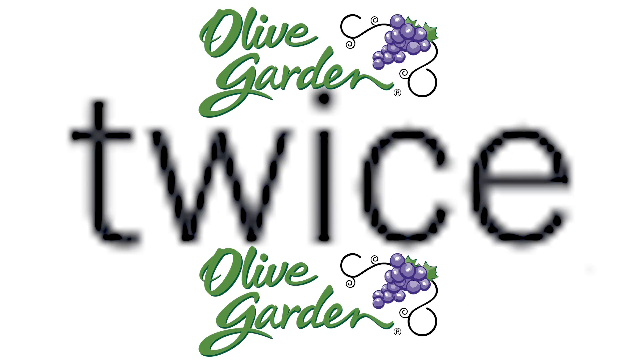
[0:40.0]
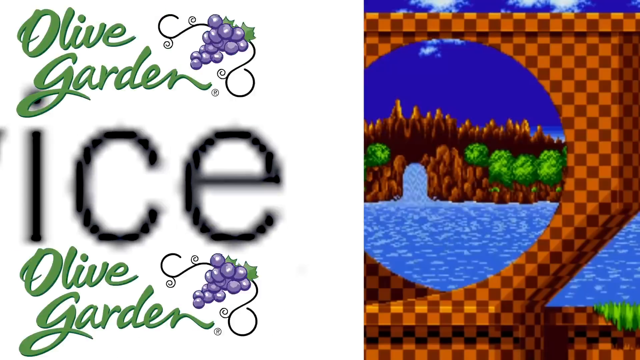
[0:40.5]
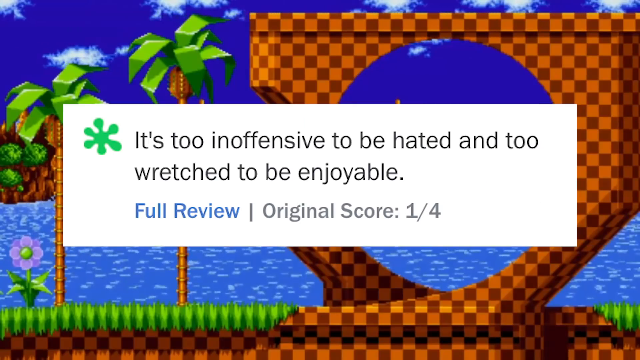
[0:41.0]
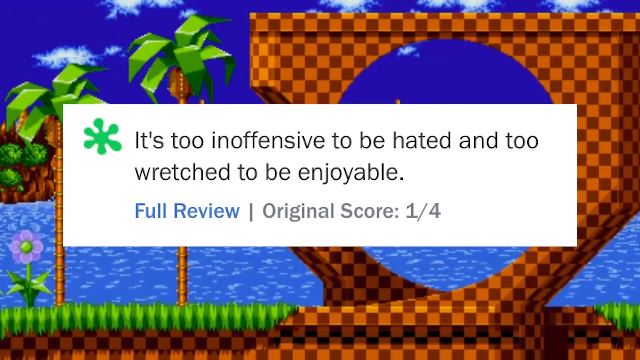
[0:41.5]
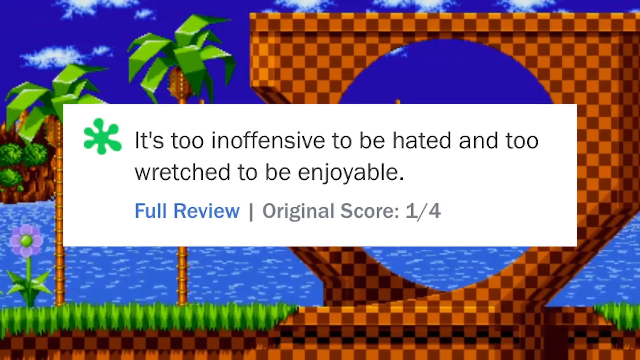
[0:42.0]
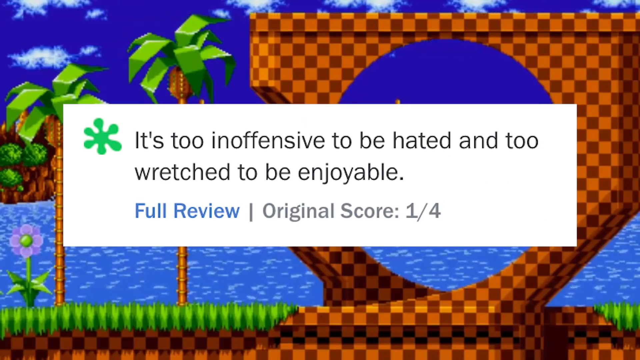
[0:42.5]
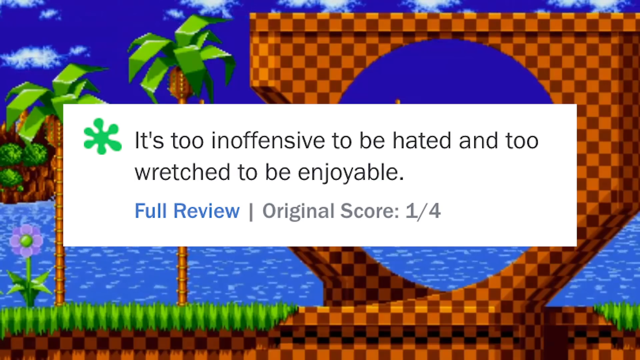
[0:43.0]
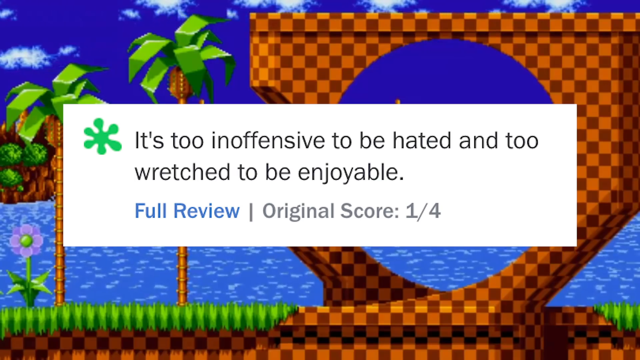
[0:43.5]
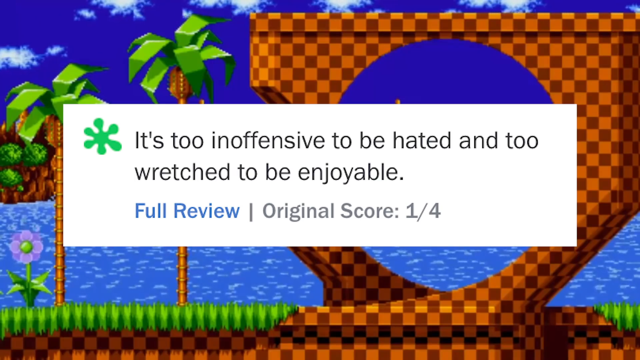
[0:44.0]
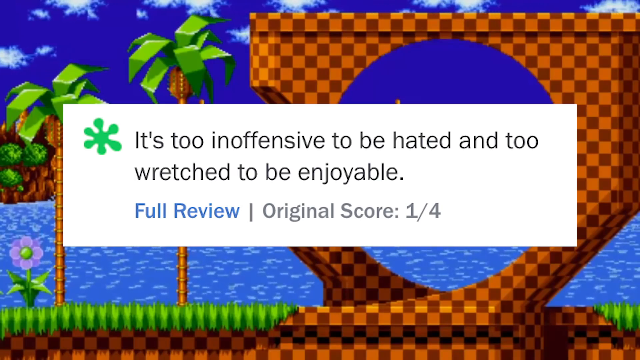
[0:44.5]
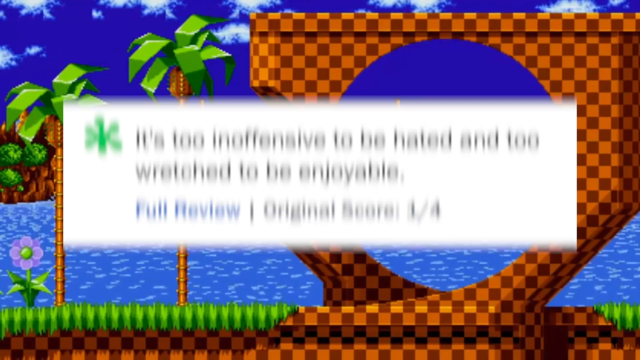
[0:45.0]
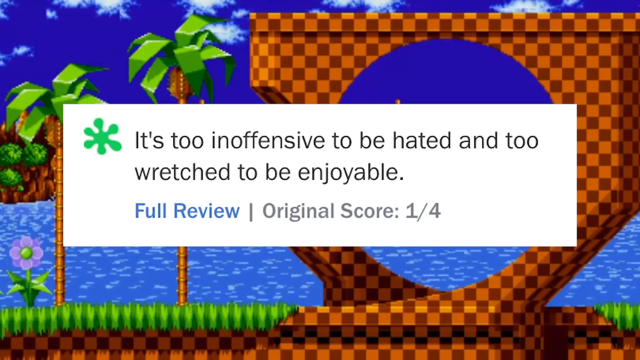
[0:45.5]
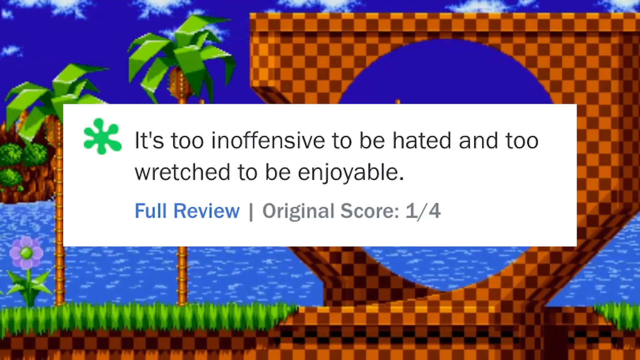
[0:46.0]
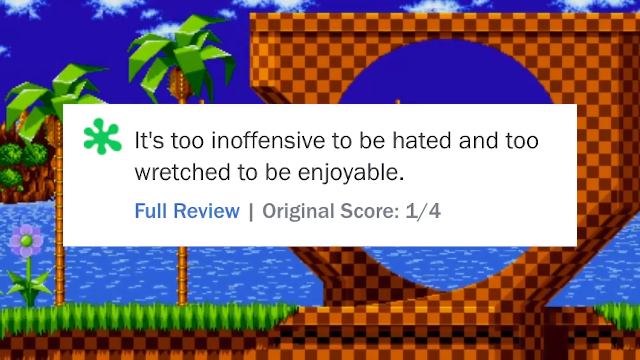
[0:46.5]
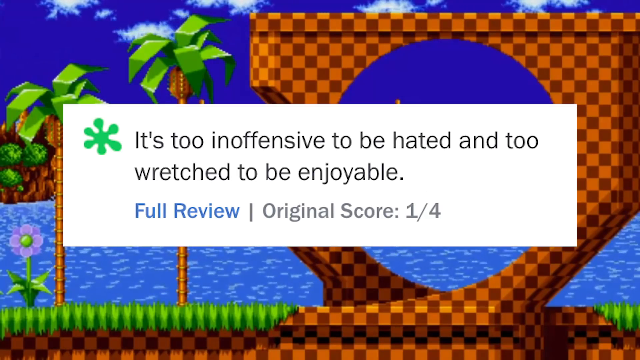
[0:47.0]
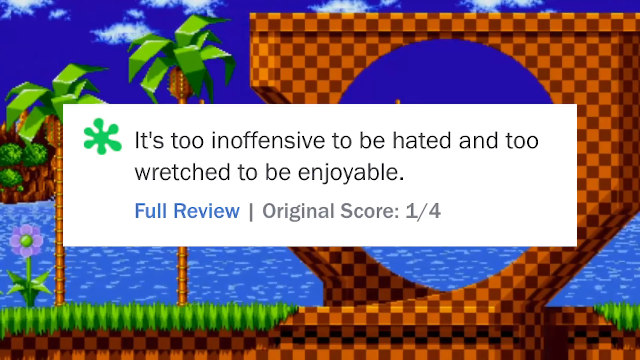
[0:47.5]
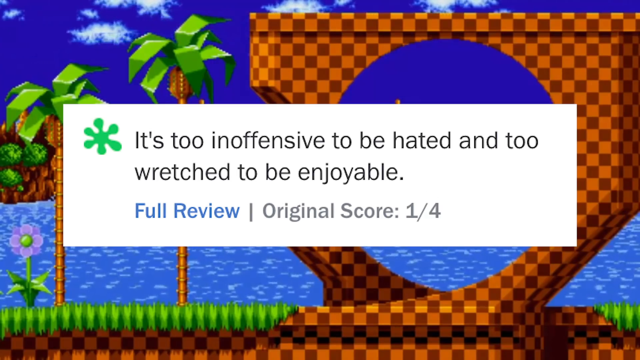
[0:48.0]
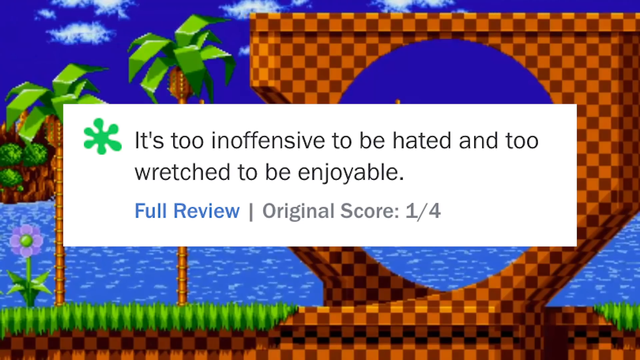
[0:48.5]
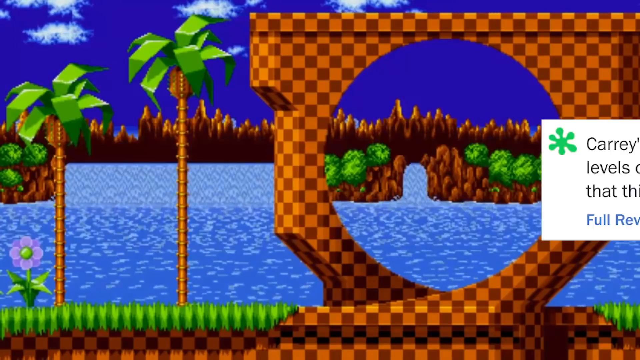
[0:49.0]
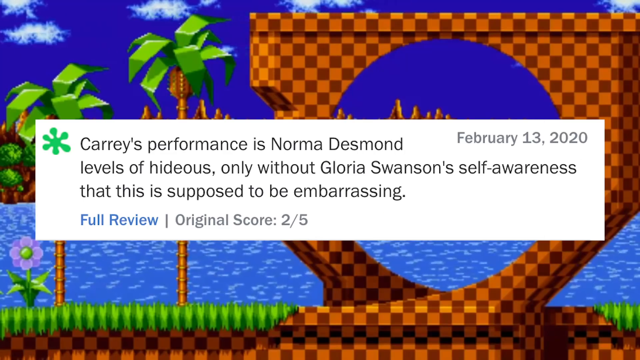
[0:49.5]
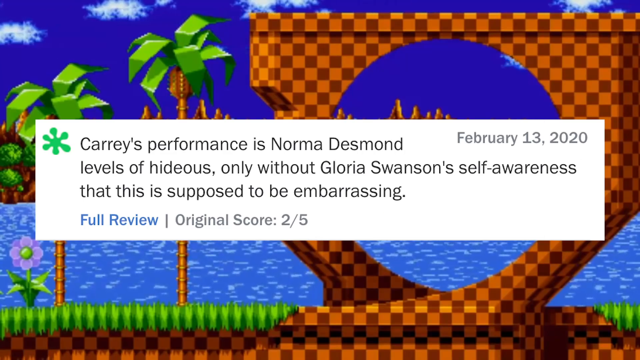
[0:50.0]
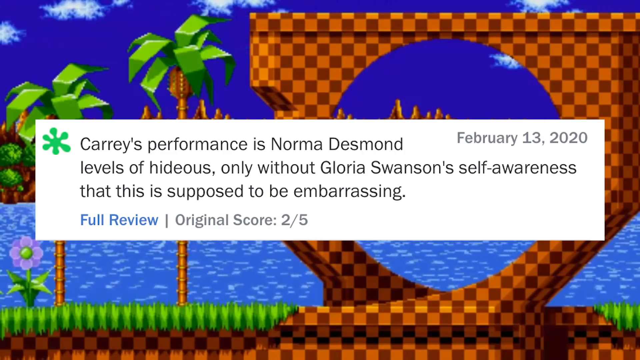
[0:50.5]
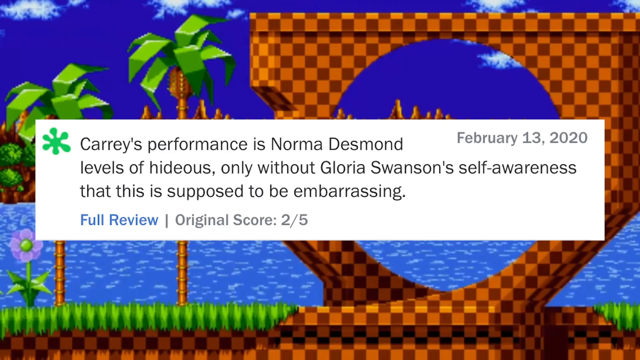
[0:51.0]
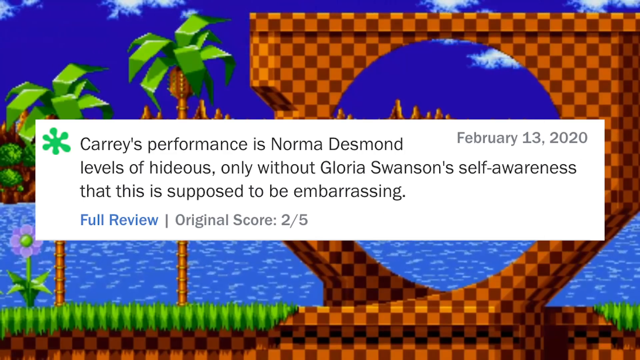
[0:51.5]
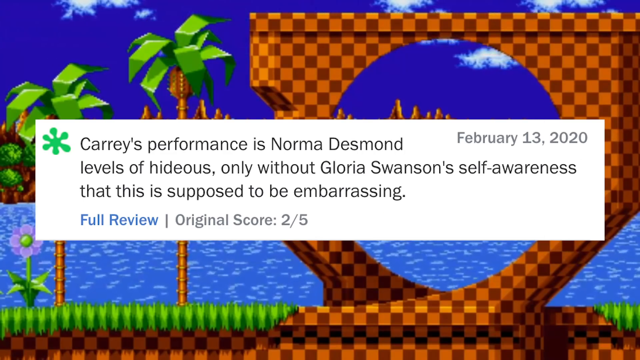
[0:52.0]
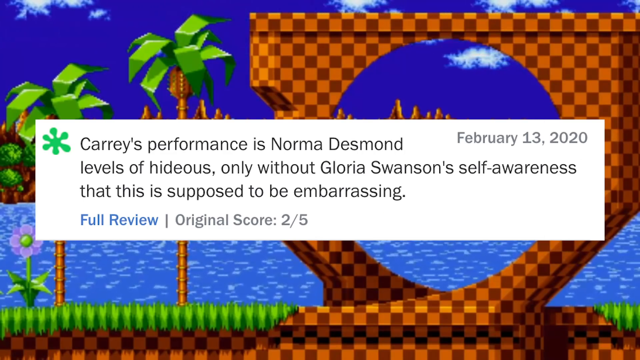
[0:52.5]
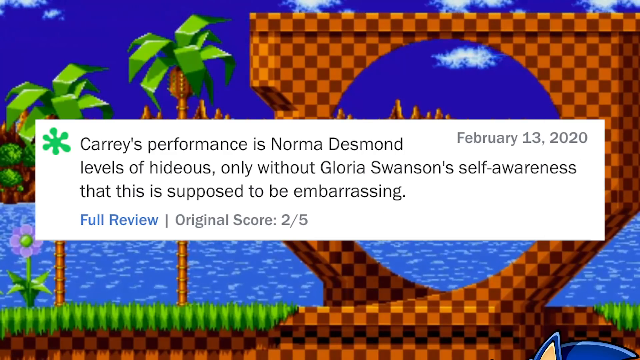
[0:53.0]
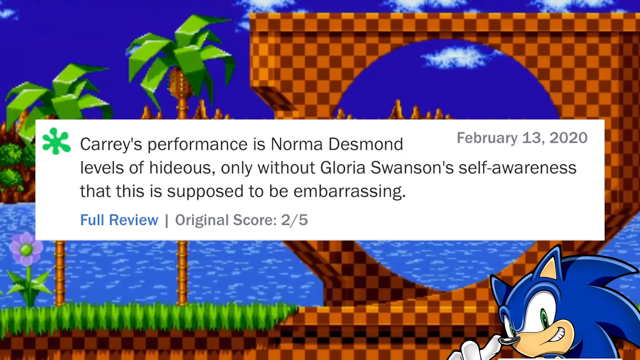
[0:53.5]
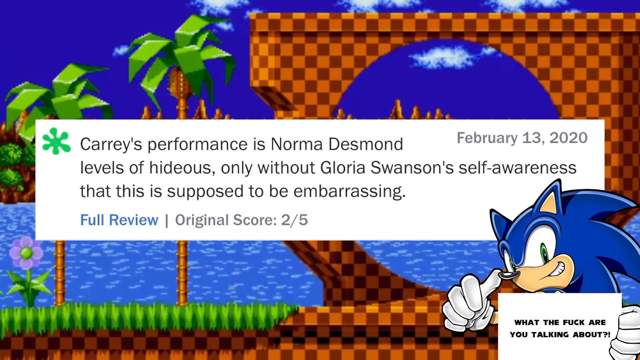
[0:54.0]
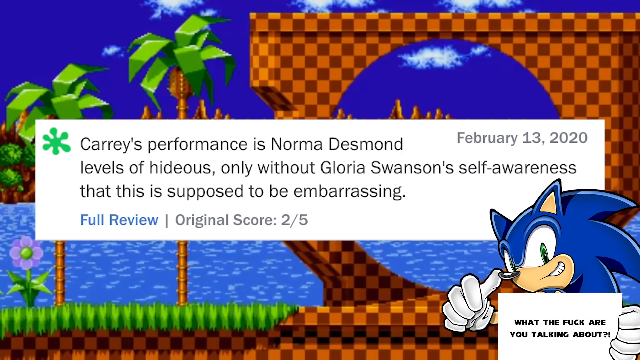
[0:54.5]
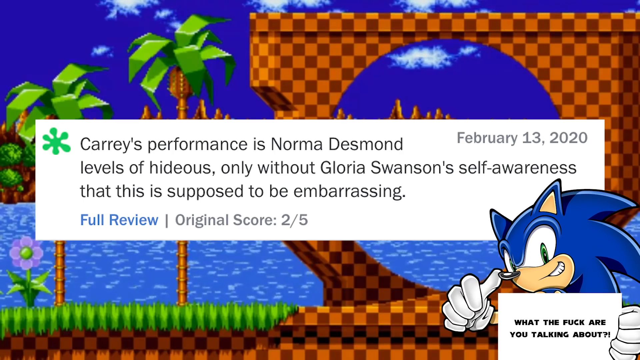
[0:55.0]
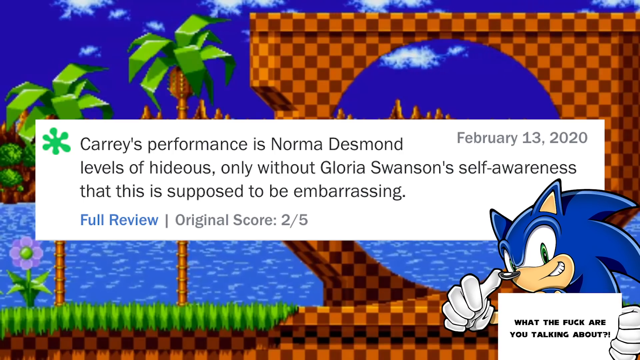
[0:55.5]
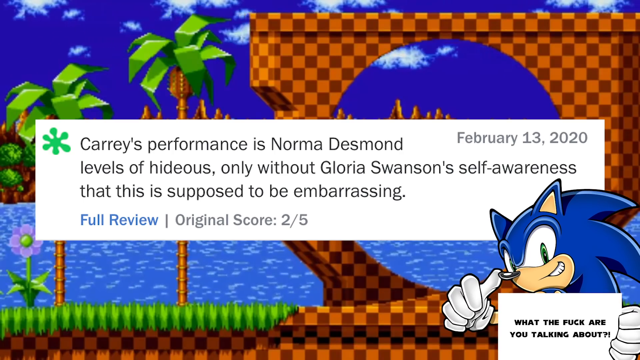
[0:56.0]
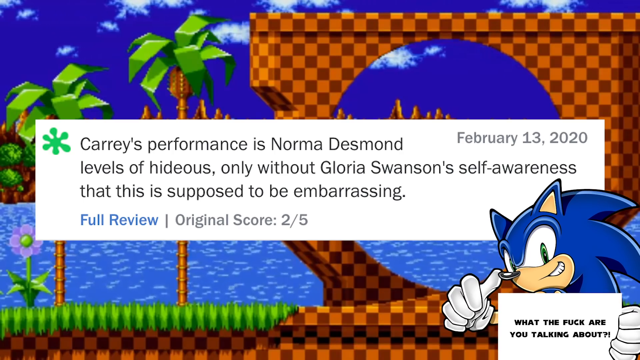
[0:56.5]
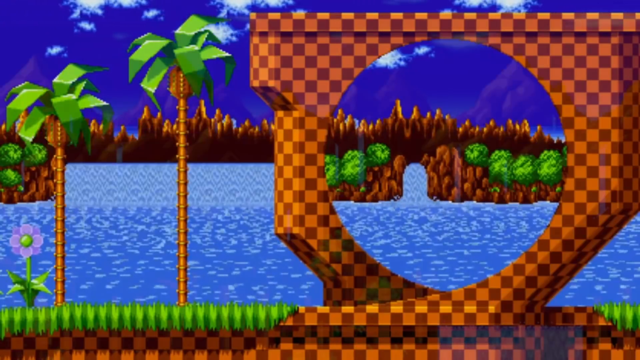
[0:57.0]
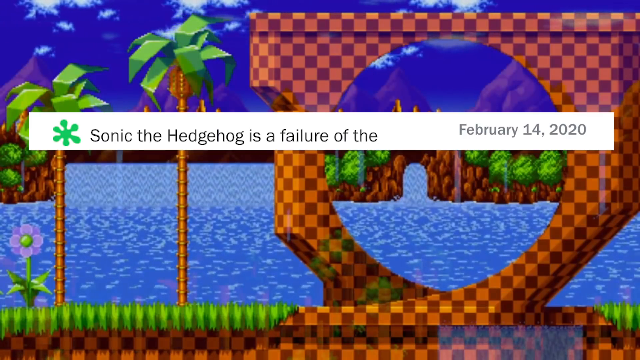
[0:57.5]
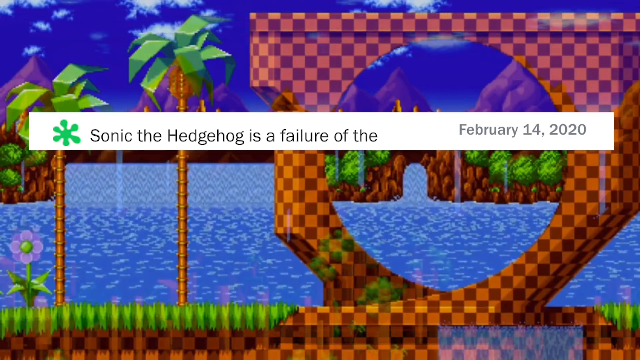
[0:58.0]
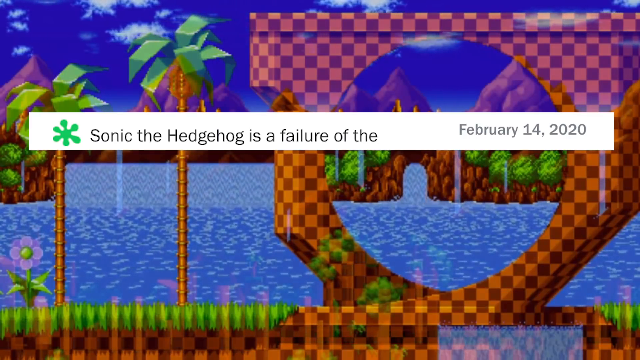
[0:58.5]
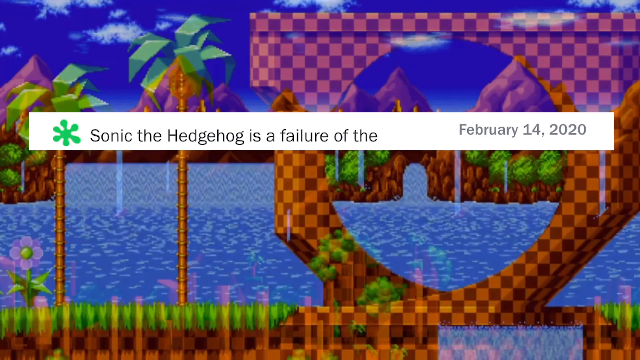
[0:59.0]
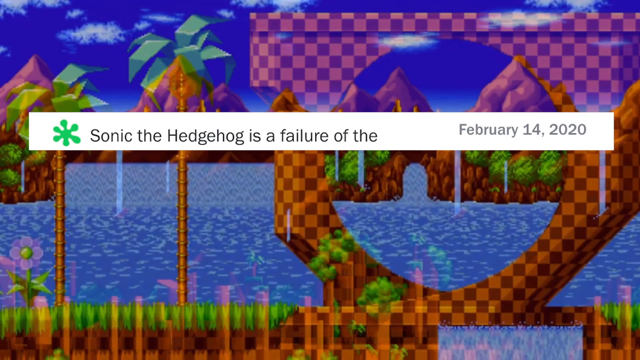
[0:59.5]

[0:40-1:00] A double Olive Garden logo is on screen. The backdrop is the same, showing some grass, a single purple flower, two palm trees, a river, the far bank of the river, a sky with some wispy clouds, and some sort of brown wooden semi-circular object in the front. The next review says, again, "it's too inoffensive to be hated and too wretched to be enjoyable," with a score of one out of four. A new review, also posted on February 13th, 2020, states that "Carrey's performance is Norma Desmond levels of hideousness, only without Gloria Swanson's self-awareness that this is supposed to be embarrassing," with a score of two out of five. The famous animated image of Sonic the Hedgehog then appears in the bottom right-hand side of the screen, holding a caption in its white-gloved hands that says "what the fuck are you talking about?" Next come the words "SONIC THE HEDGEHOG IS A FAILURE OF THE..."